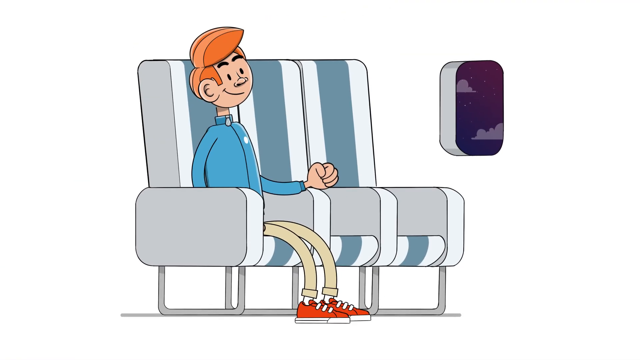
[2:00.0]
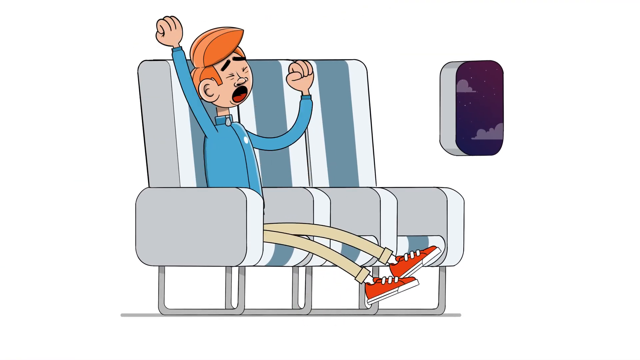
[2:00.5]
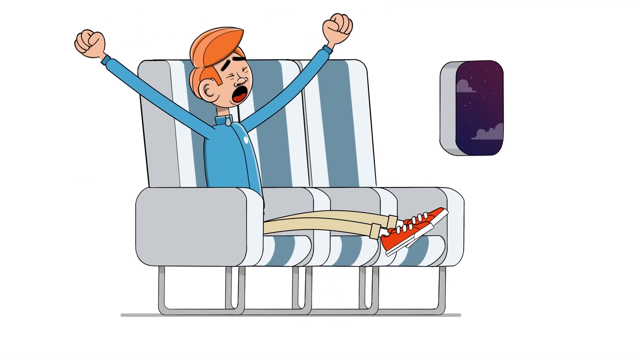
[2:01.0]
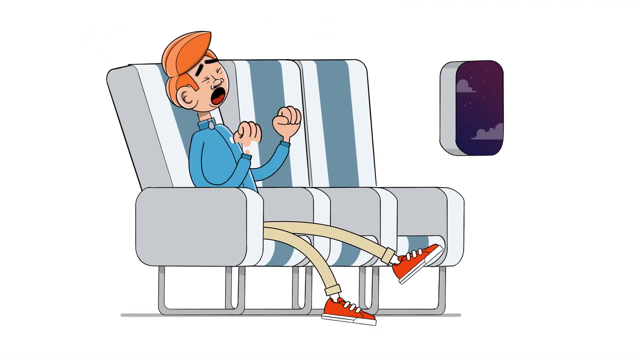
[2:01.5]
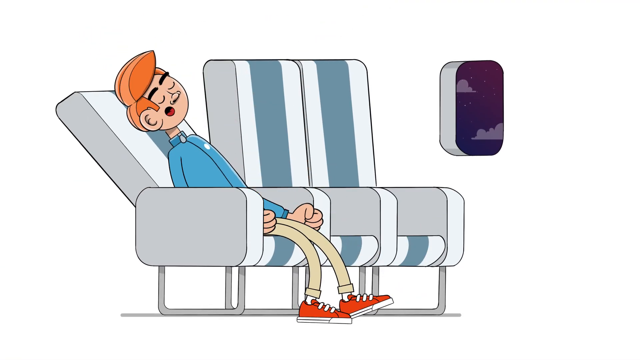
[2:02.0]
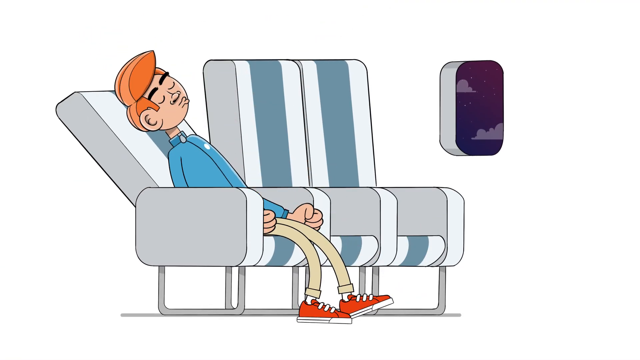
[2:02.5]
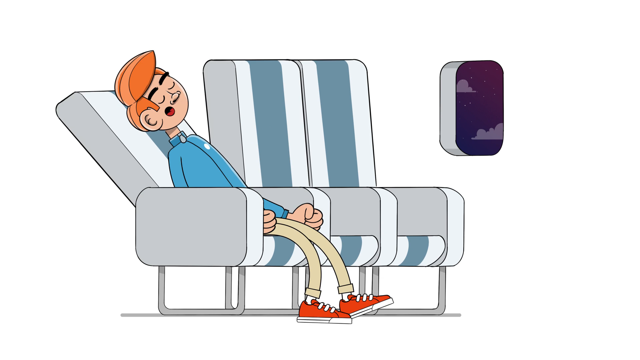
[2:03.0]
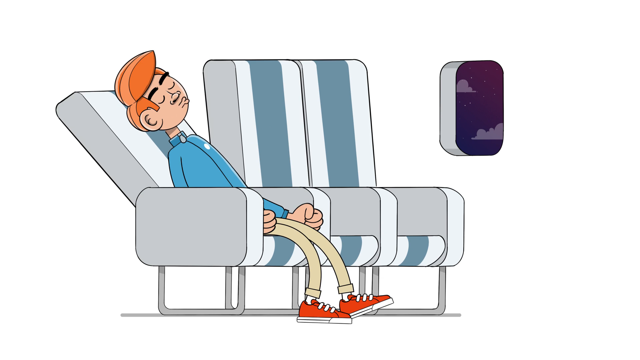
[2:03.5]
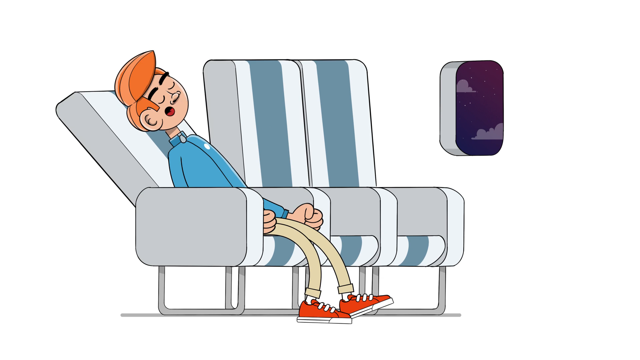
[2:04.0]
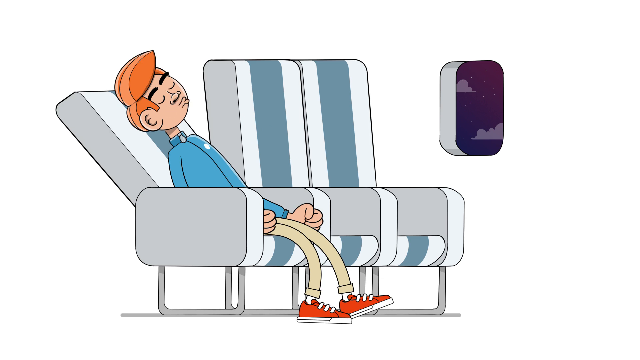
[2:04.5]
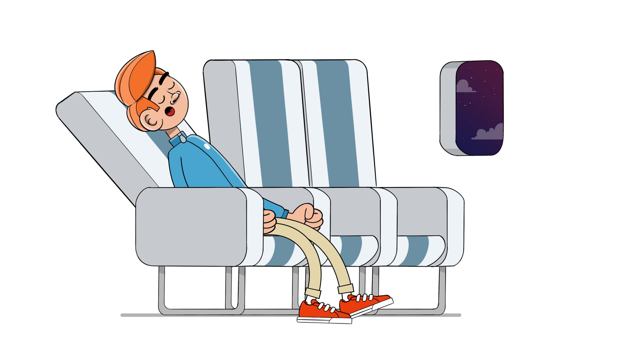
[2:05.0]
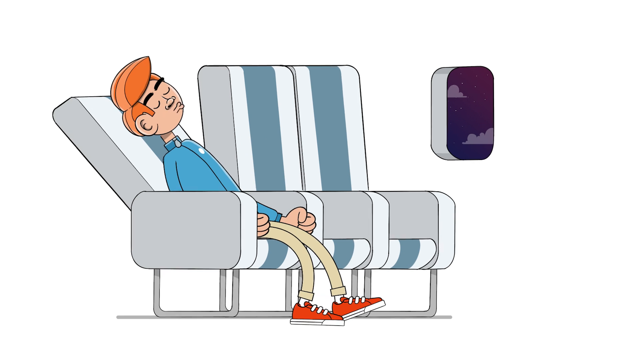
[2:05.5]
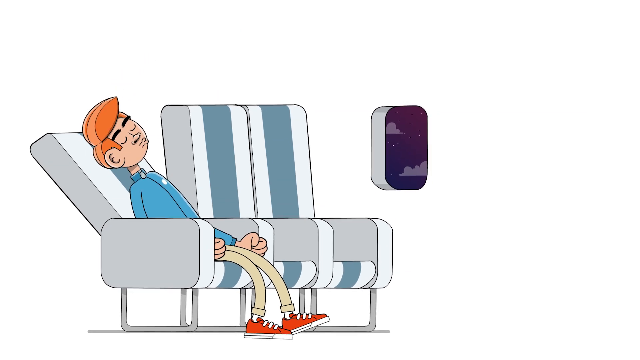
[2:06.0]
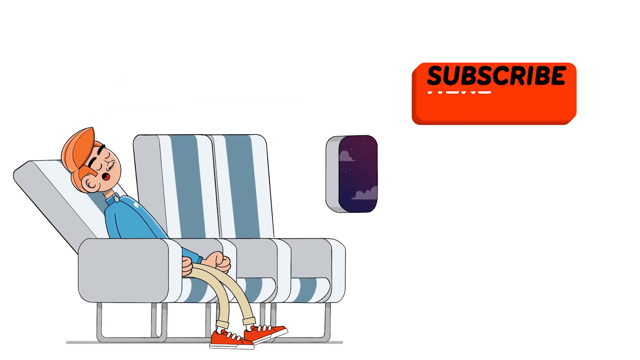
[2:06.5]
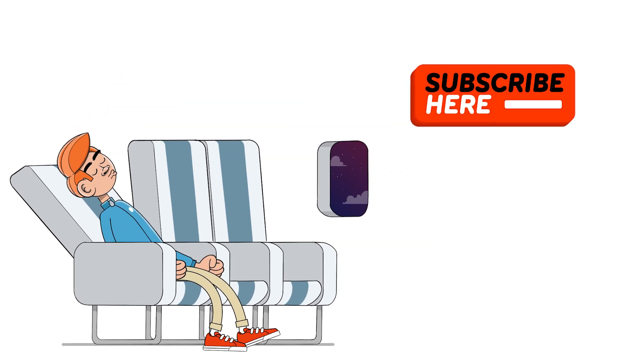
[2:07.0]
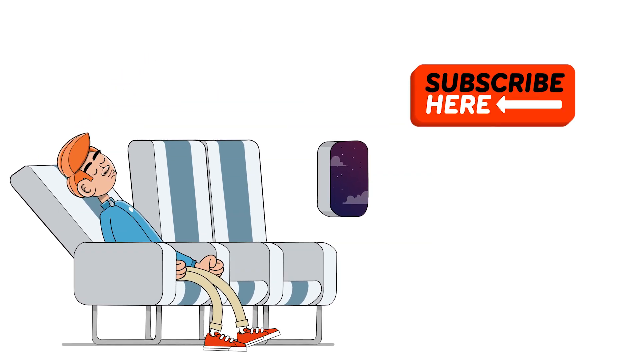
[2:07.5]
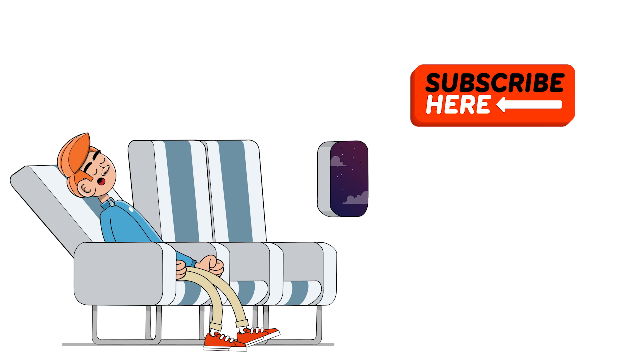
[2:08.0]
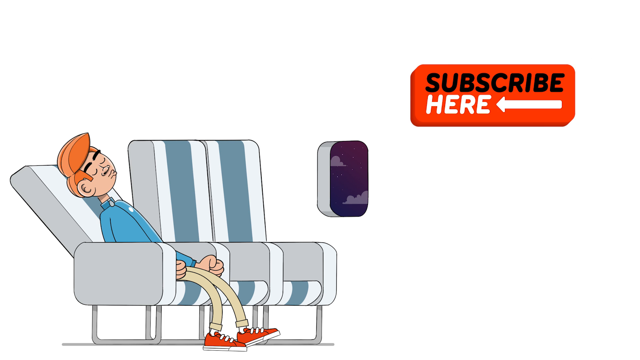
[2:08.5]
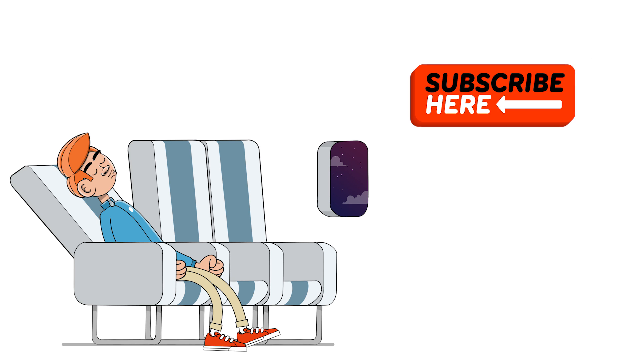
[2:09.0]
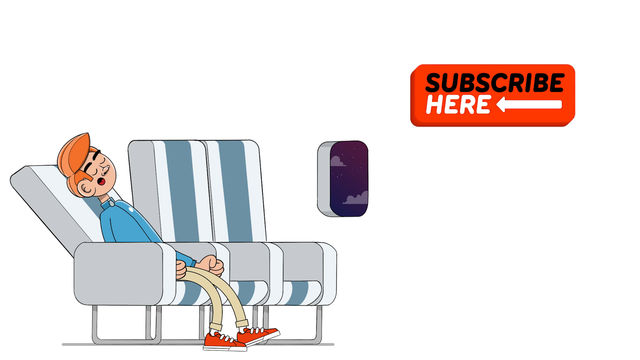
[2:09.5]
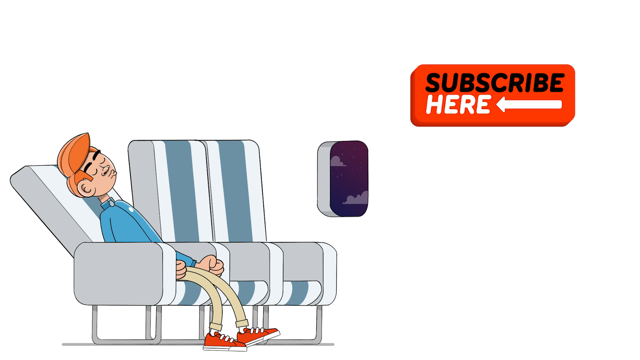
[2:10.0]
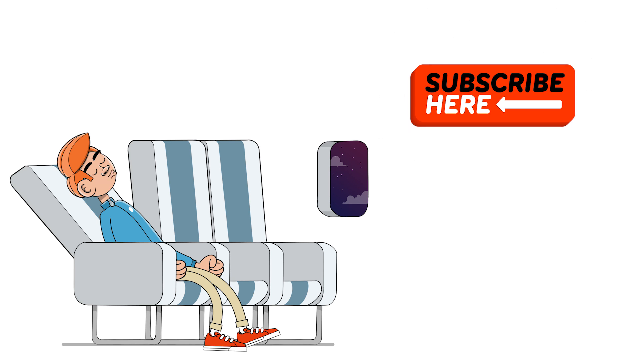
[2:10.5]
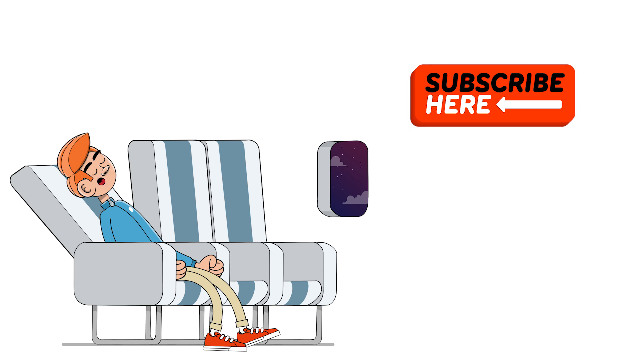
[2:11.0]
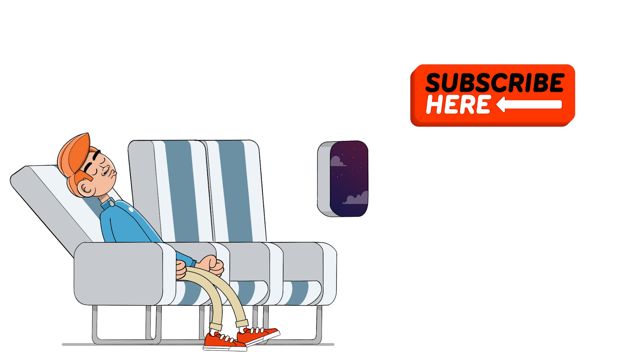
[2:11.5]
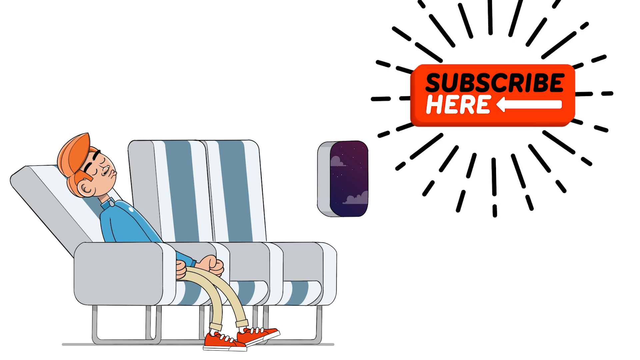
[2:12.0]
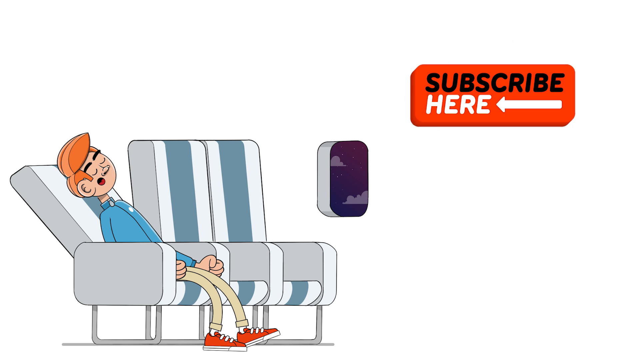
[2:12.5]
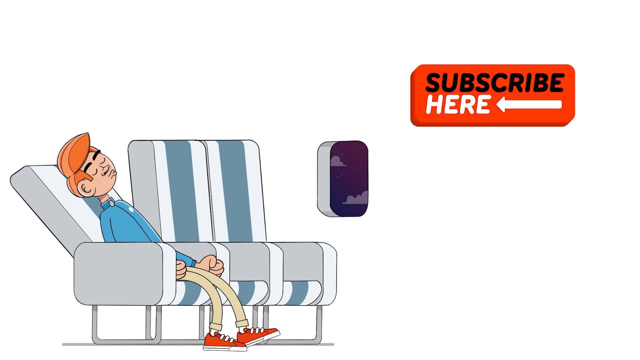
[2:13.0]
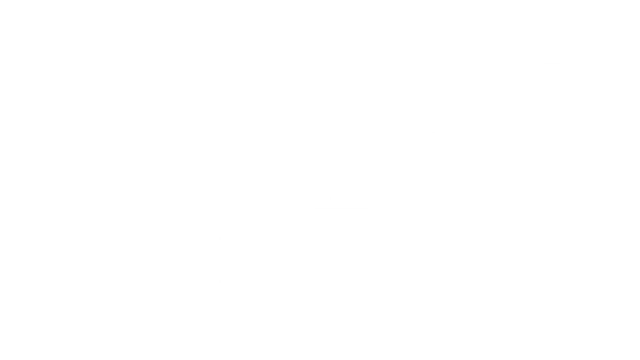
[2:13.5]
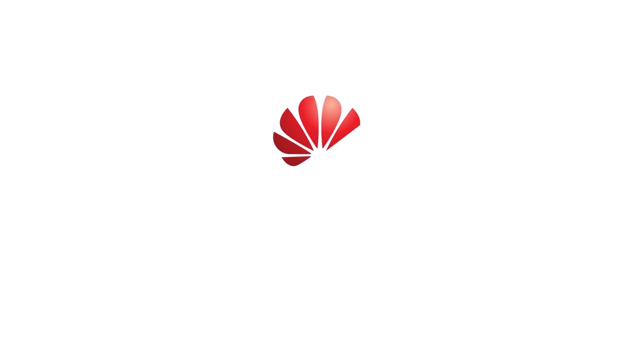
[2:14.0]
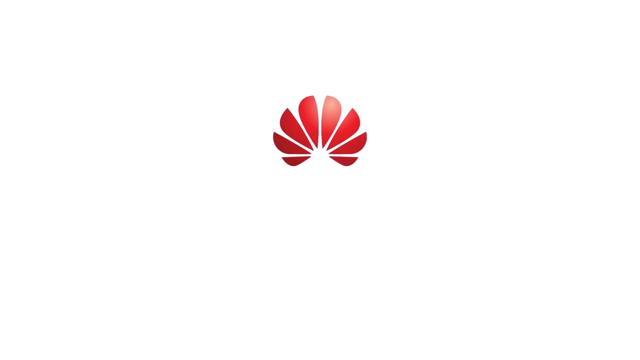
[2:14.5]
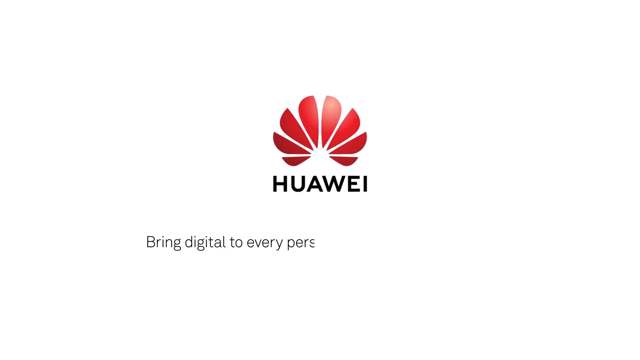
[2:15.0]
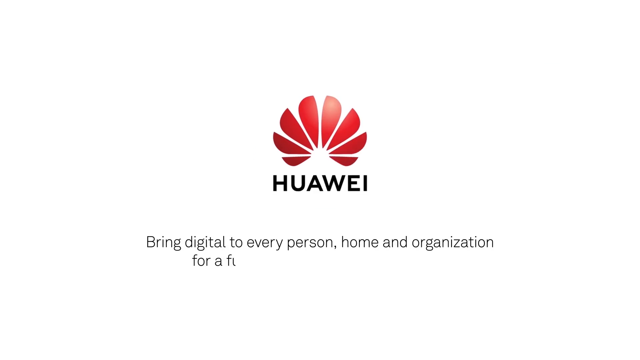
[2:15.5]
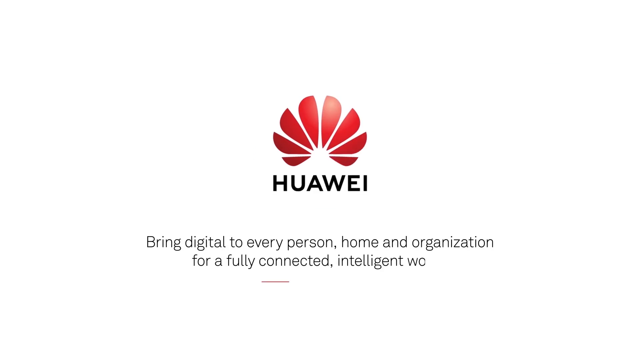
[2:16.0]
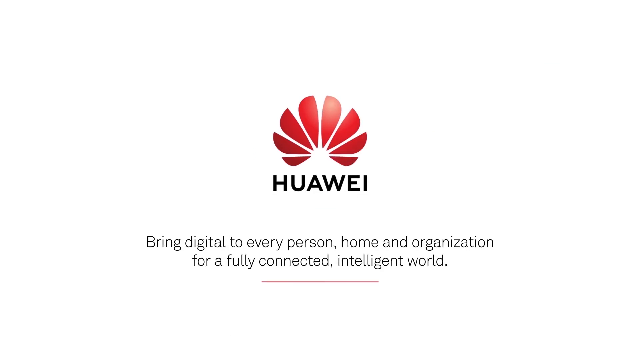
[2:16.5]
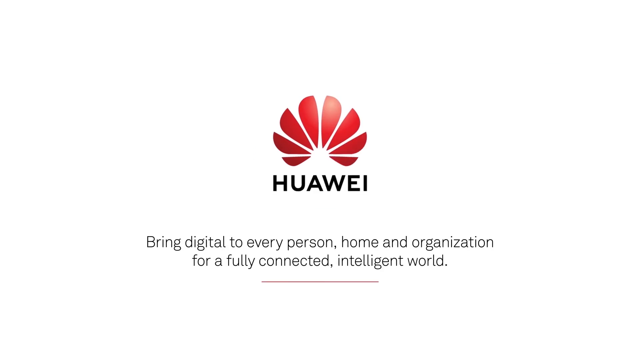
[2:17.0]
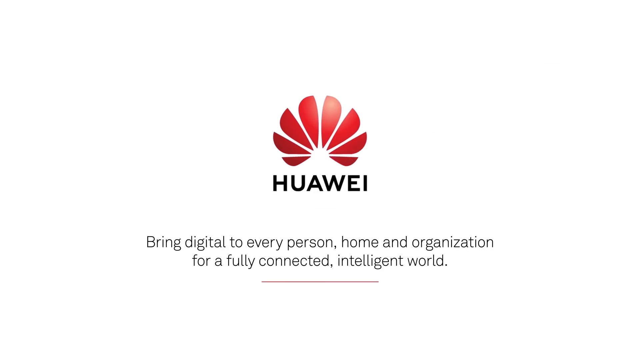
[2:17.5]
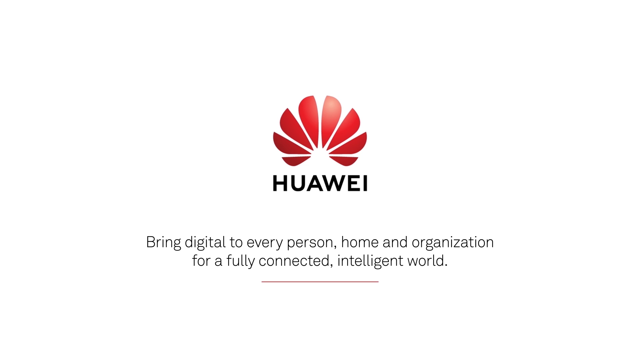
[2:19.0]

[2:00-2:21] An animated man with red hair, a long-sleeved blue shirt, khaki pants and red tennis shoes sits in the aisle seat of a row of white airplane seats with a blue stripe down the center, with a window to his left showing a purple sky. He yawns, raises both fists into the air, and lifts his legs off the floor so they are parallel to it. He then leans back, reclines his seat, and falls asleep, blowing air out of his mouth as he sleeps. The view zooms back slightly, and in the top right a red box says "subscribe here", with a long arrow pointing to "here". What looks like abstract black fireworks explode around the red rectangle, with straight lines coming out in a circle around it. A white screen follows, with what looks like eight red flower petals forming in the center. Huawei appears below them, and at the bottom of the screen is the sentence "bring digital to every person, home, and organization", followed by a short horizontal red dash beneath the text.